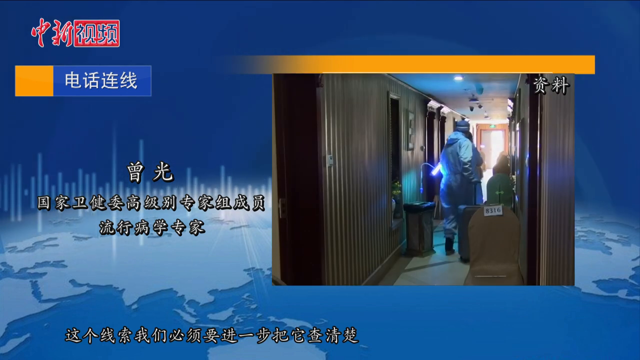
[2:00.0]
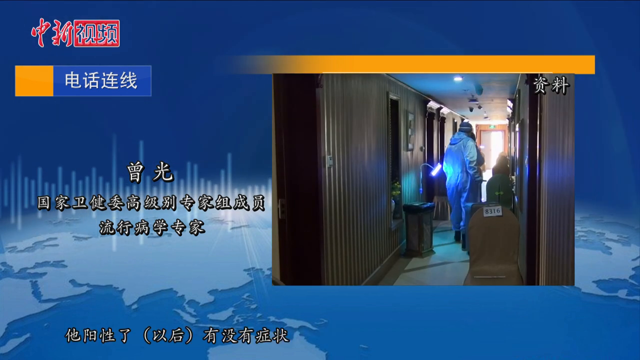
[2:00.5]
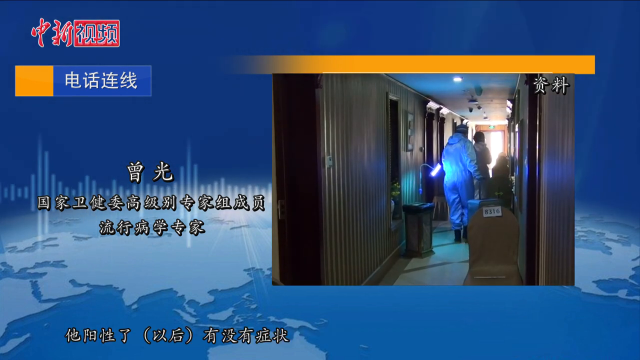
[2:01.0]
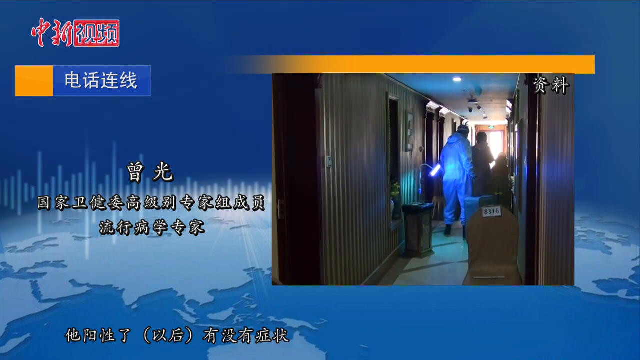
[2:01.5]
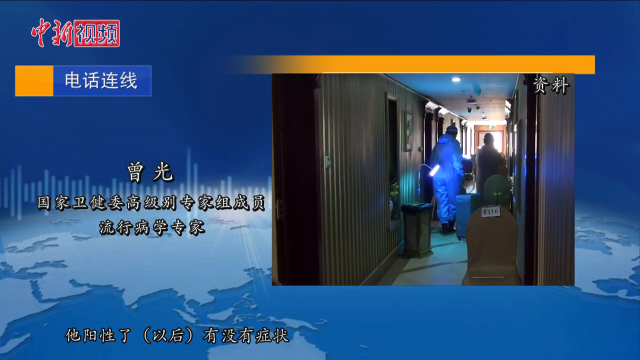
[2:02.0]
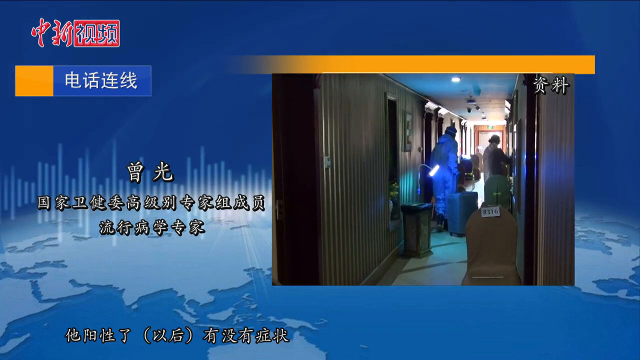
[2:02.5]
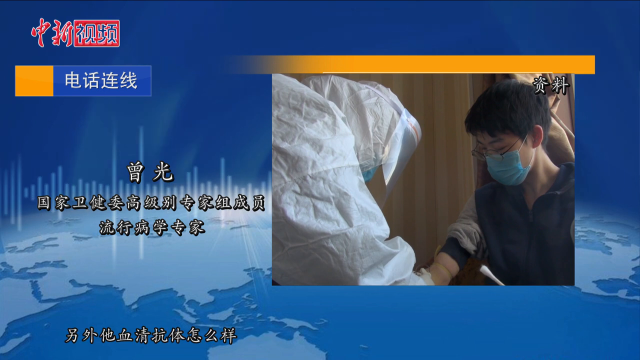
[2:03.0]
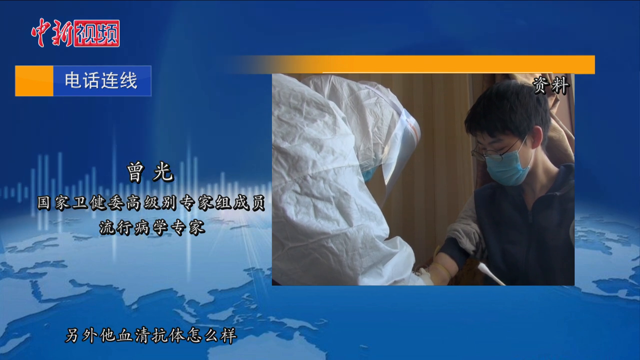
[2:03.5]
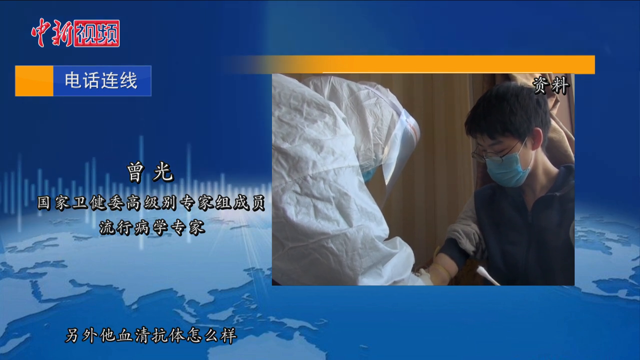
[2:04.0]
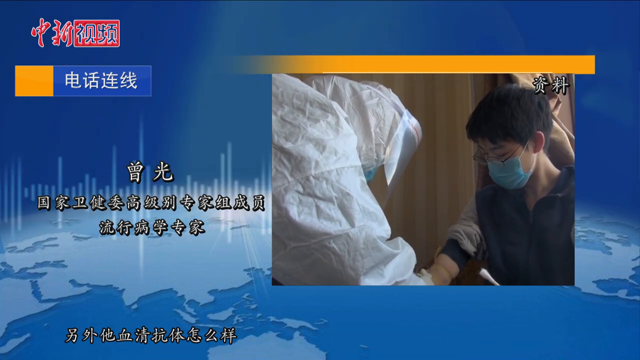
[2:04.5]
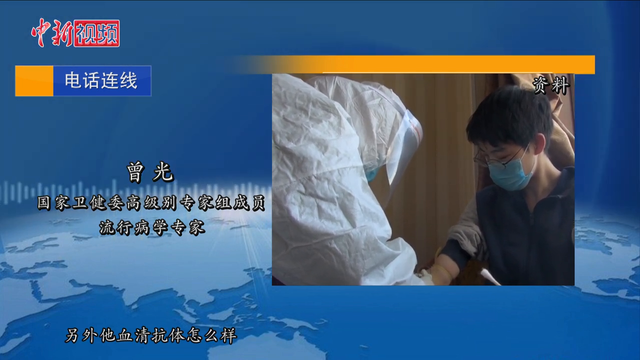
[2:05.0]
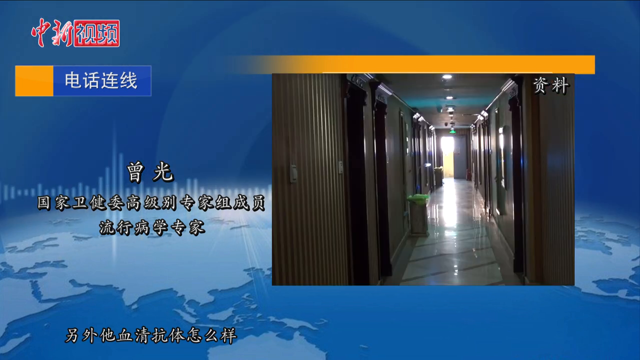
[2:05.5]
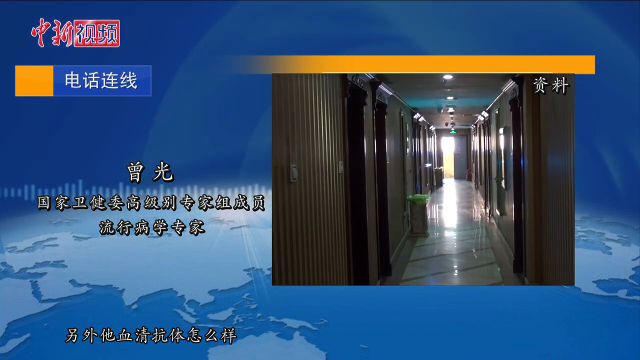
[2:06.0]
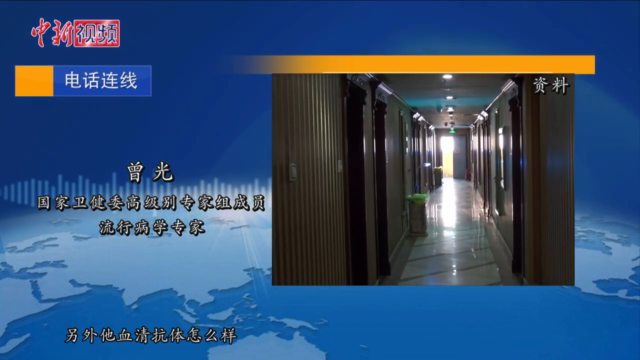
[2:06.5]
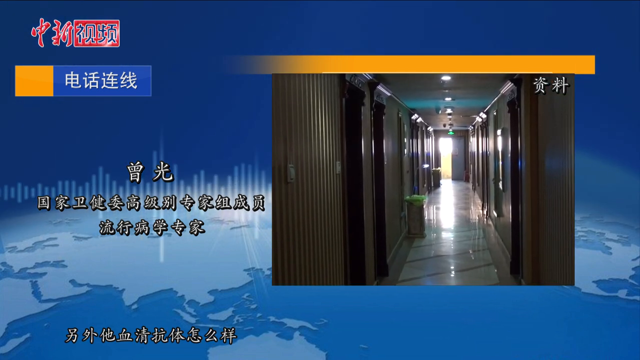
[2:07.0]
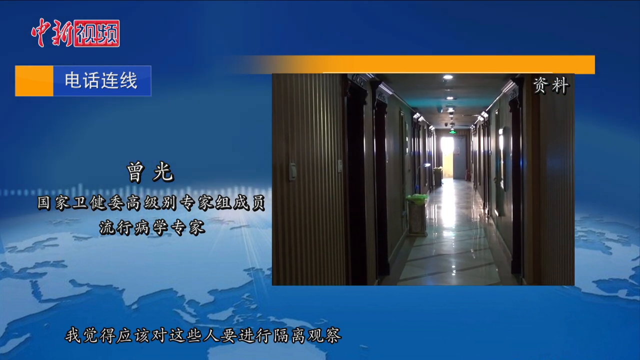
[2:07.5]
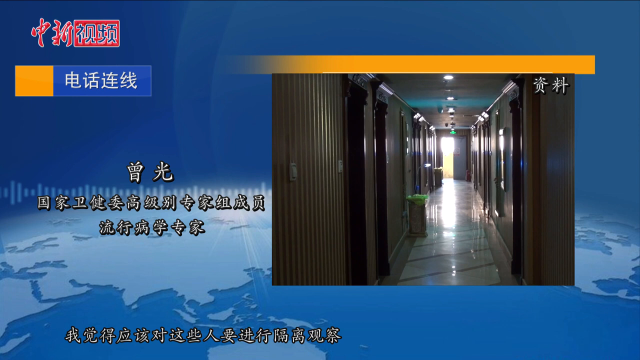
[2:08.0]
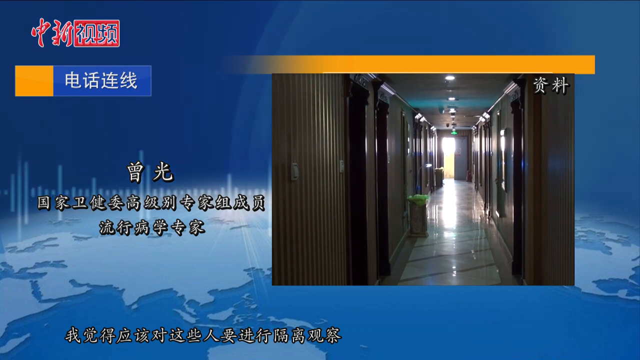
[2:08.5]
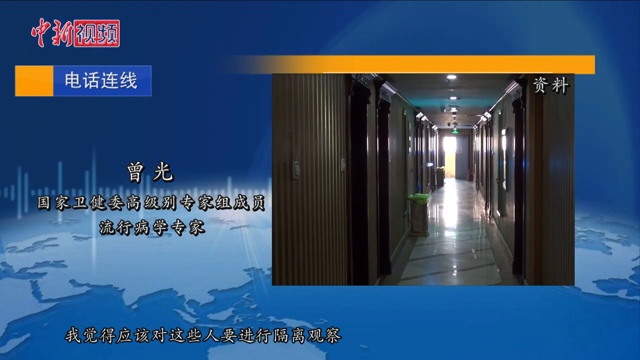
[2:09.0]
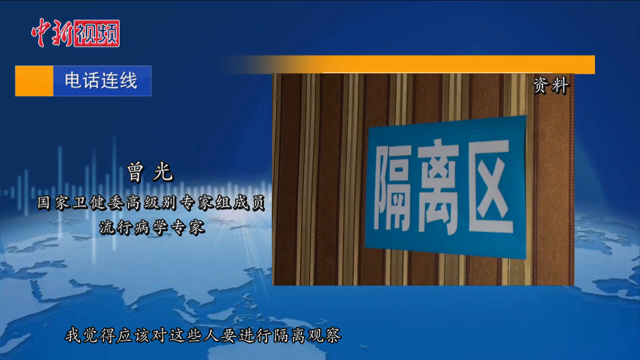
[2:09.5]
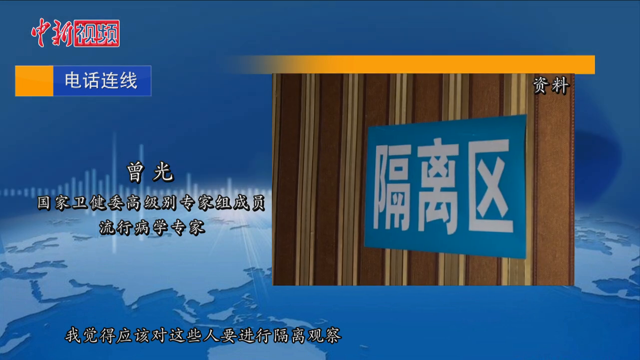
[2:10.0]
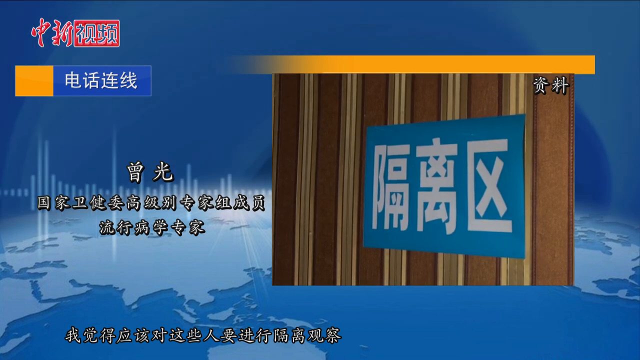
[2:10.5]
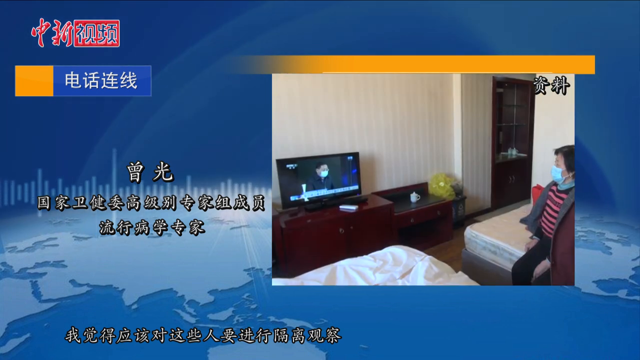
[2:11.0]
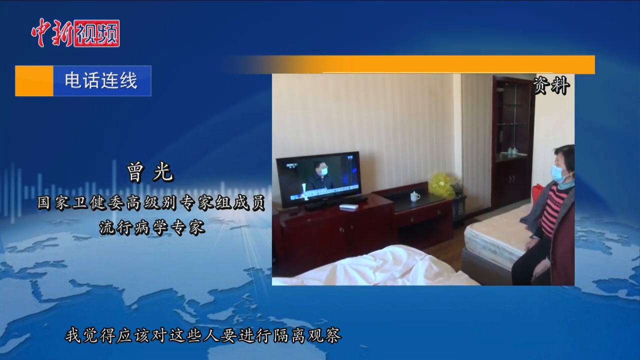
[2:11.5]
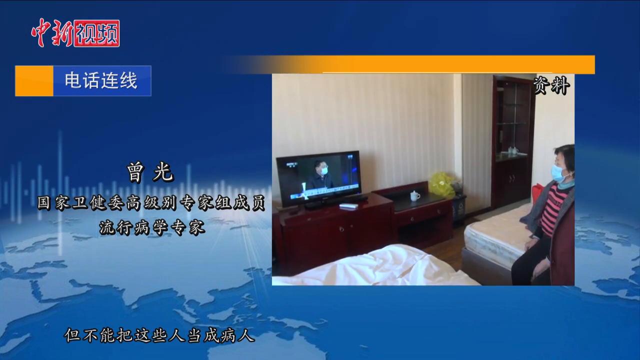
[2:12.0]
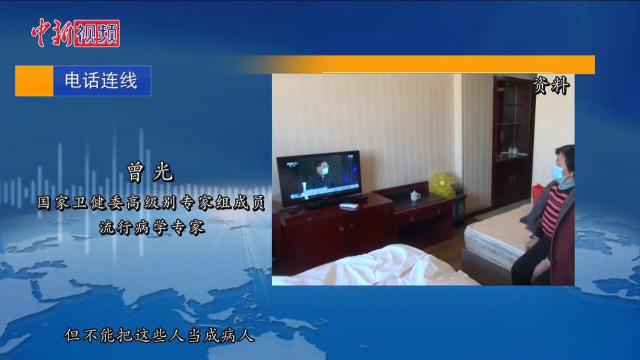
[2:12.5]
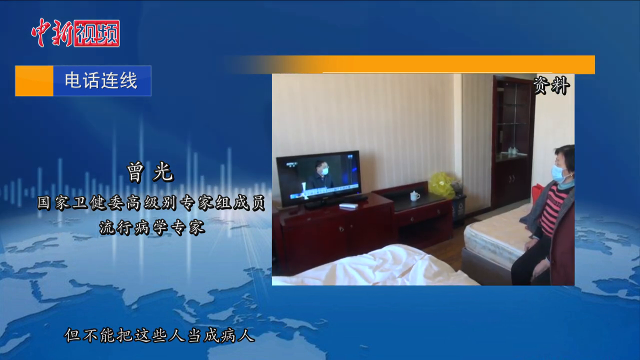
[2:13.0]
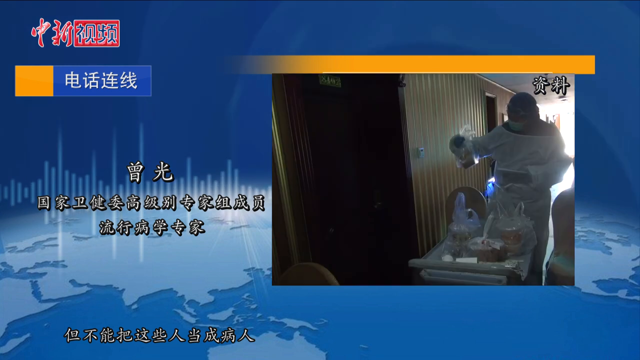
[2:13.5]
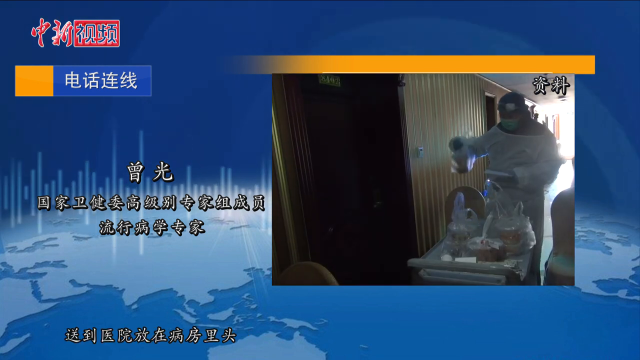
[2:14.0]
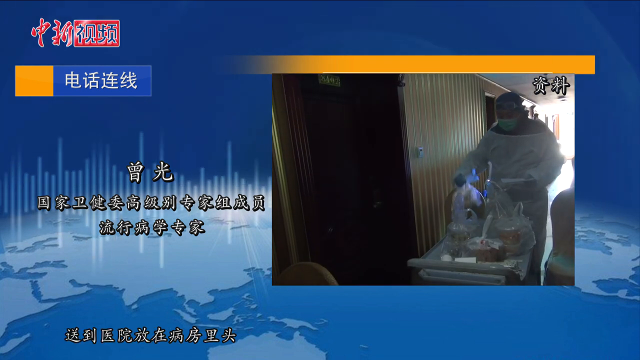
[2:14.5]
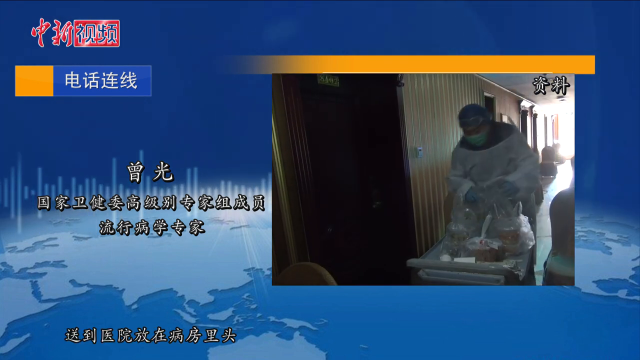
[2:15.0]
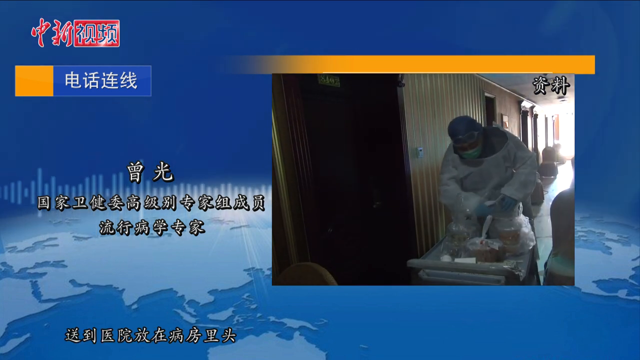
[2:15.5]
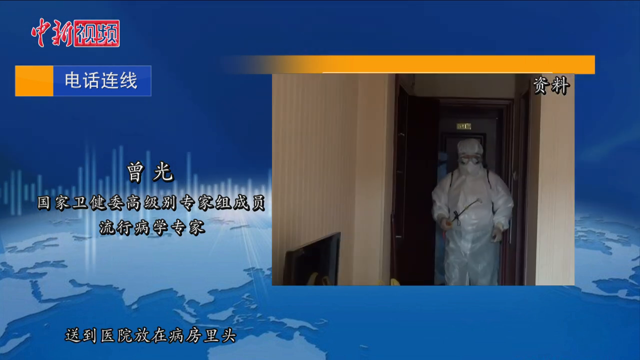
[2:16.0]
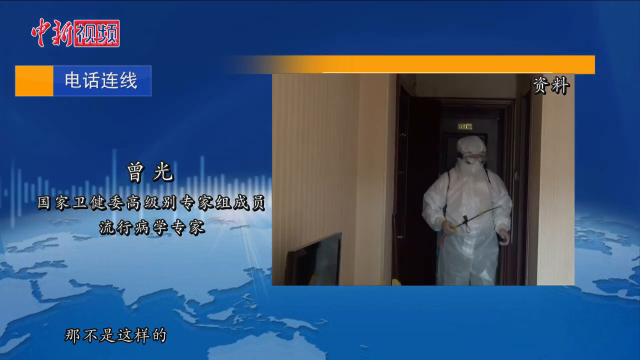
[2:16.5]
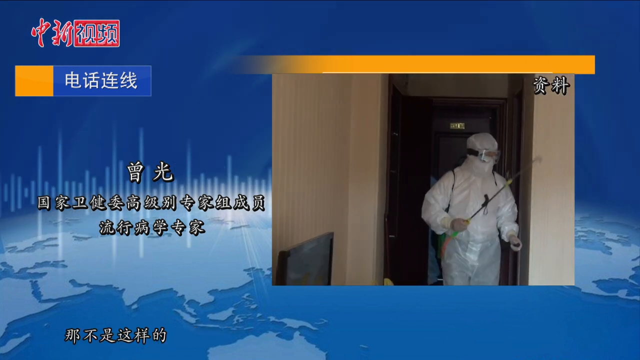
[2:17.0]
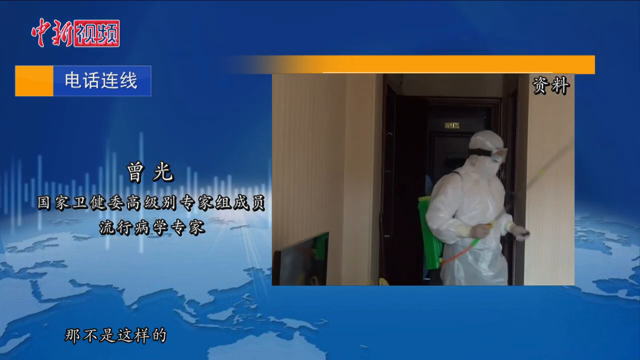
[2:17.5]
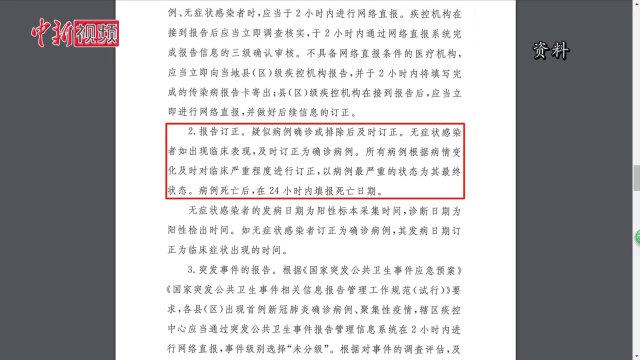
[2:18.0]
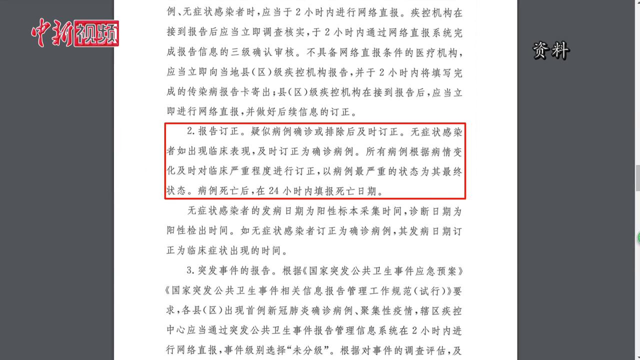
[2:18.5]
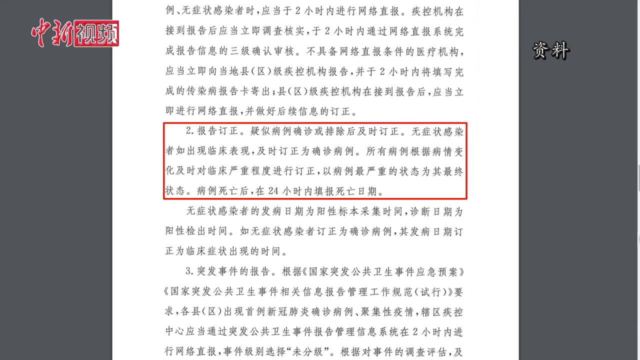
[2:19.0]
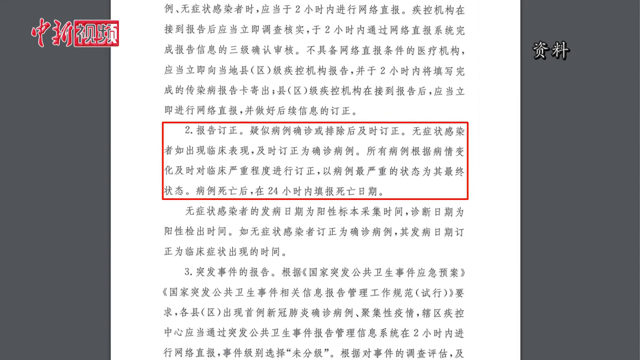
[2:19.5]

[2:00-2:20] Someone has their sleeve up, possibly getting a shot, while a person in a hazmat-type scrub kind of suit examines something on their arm. The footage is back in the small box inside the larger screen, looking down a hallway of what is apparently a hotel. A woman sits on a bed looking at a TV. Somebody appears to bring room service, followed by somebody walking in with what may be cleaning spray. The place is possibly a quarantine station.